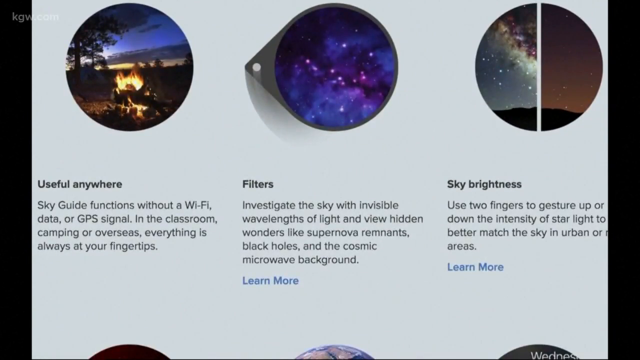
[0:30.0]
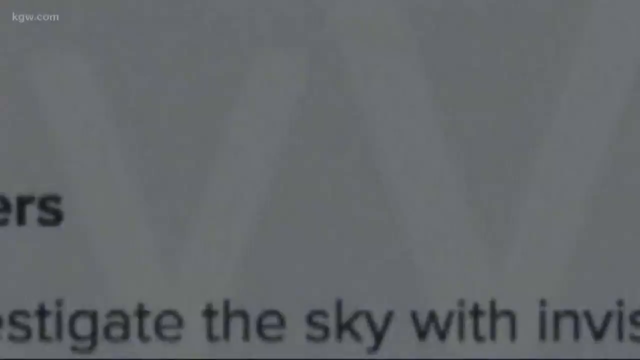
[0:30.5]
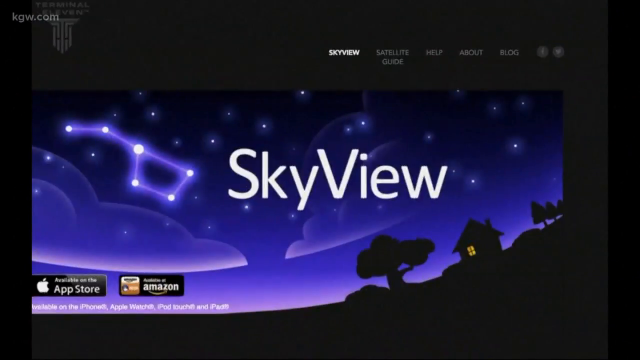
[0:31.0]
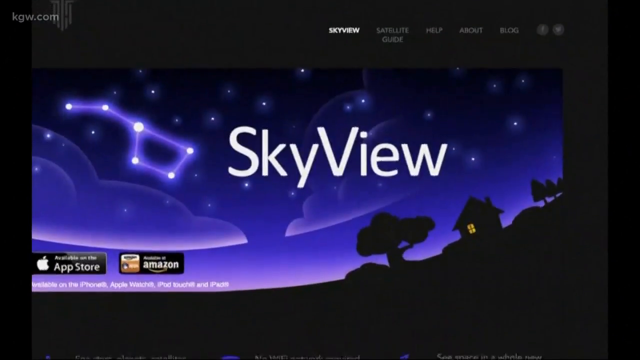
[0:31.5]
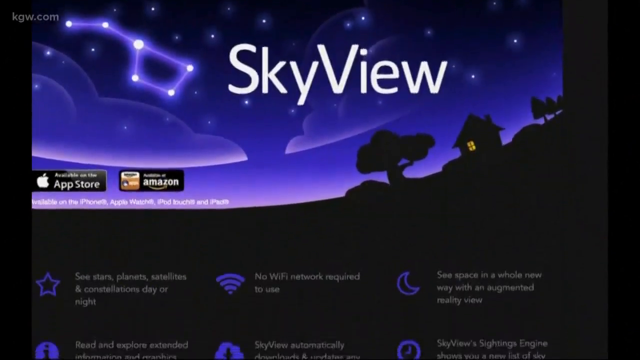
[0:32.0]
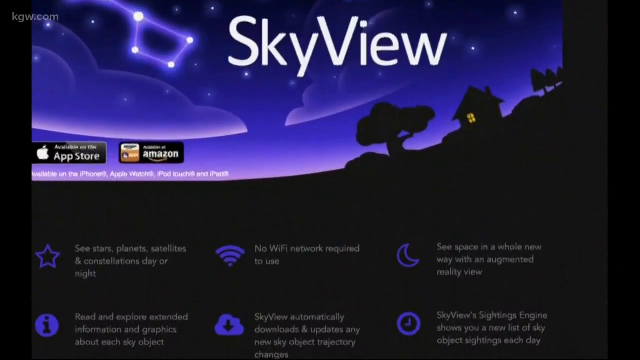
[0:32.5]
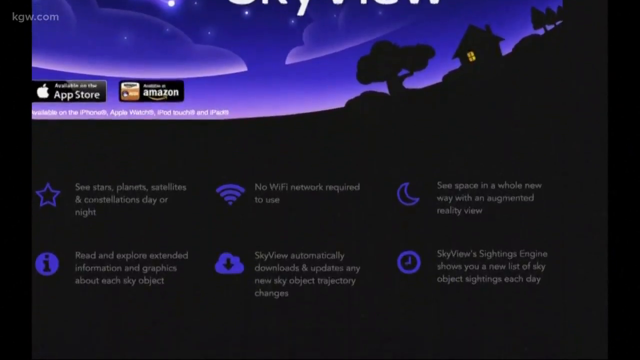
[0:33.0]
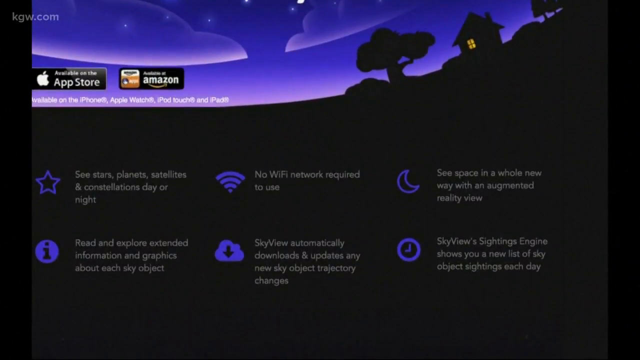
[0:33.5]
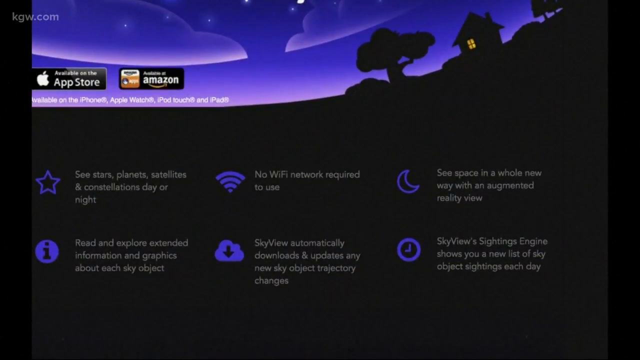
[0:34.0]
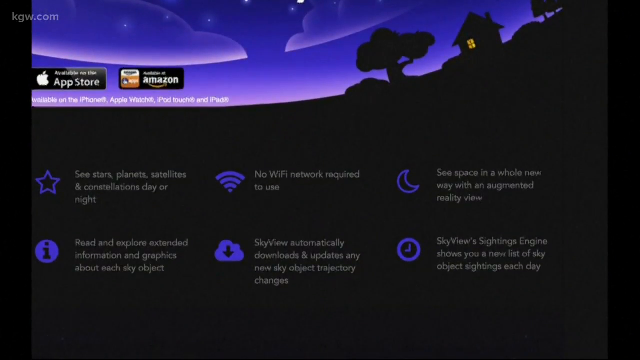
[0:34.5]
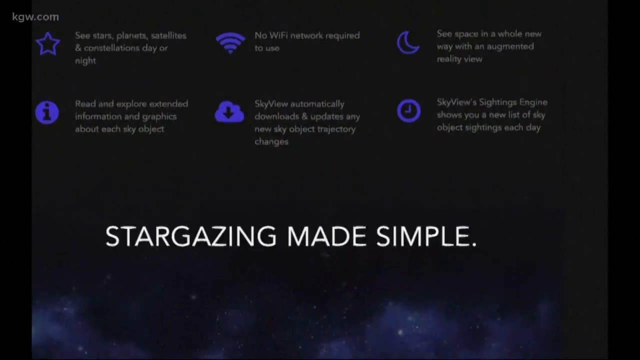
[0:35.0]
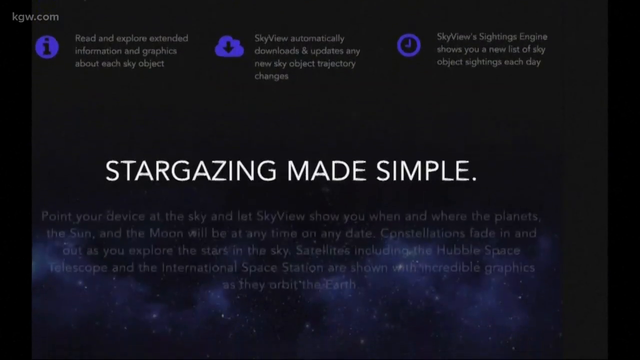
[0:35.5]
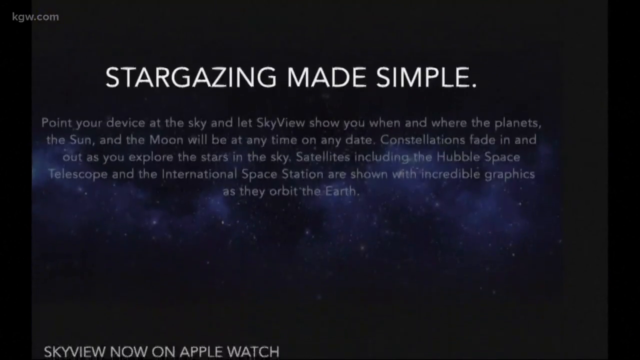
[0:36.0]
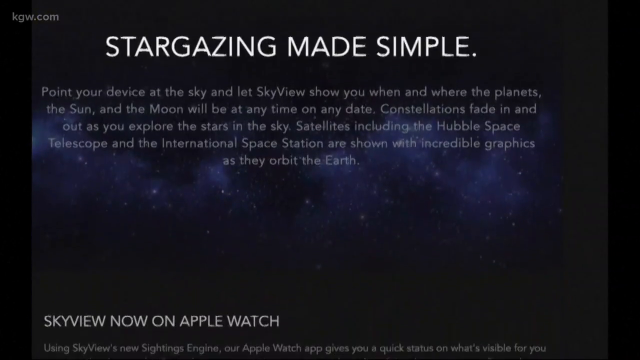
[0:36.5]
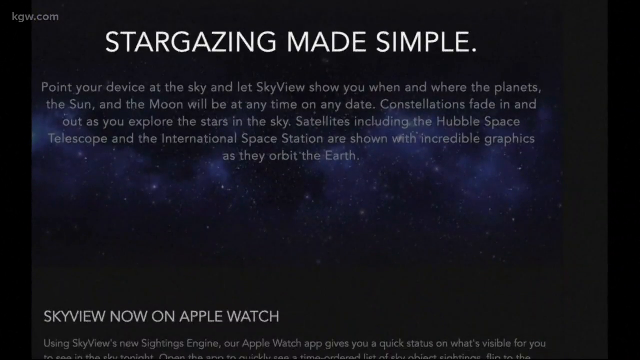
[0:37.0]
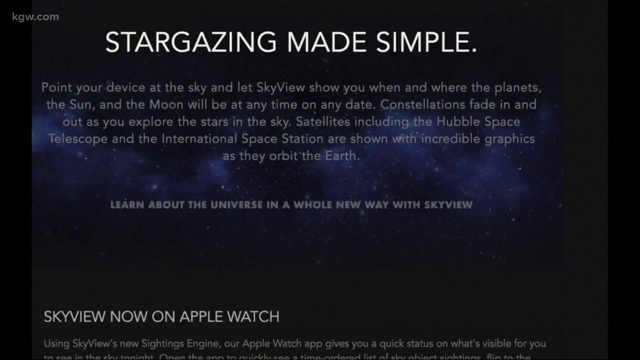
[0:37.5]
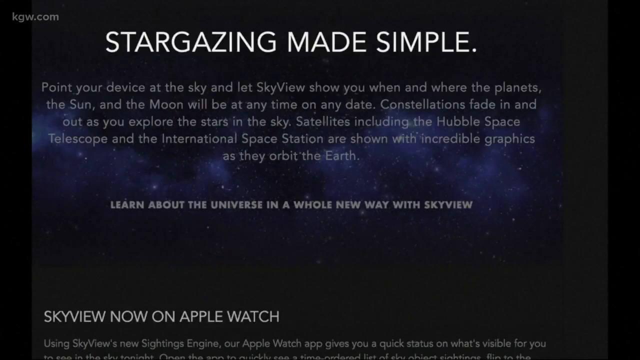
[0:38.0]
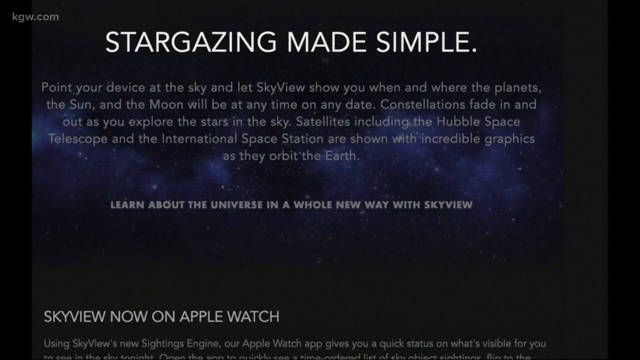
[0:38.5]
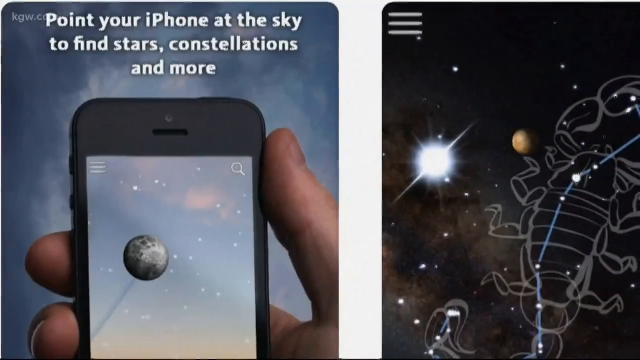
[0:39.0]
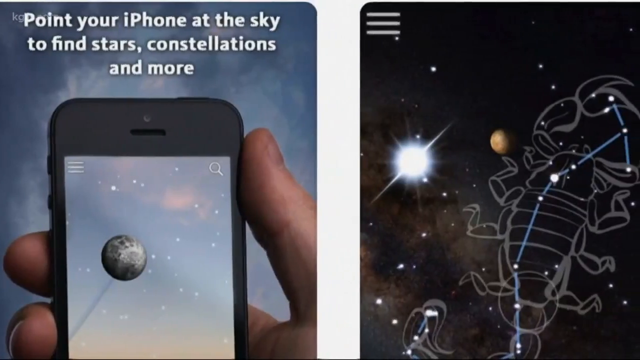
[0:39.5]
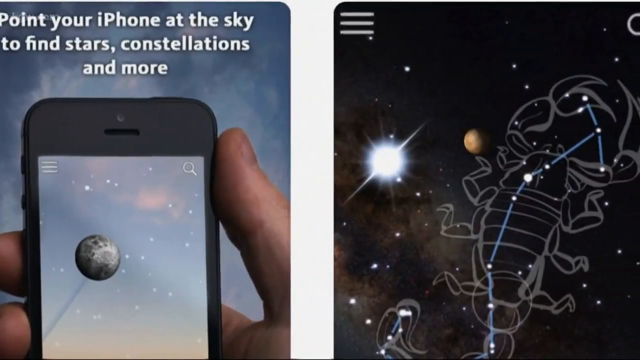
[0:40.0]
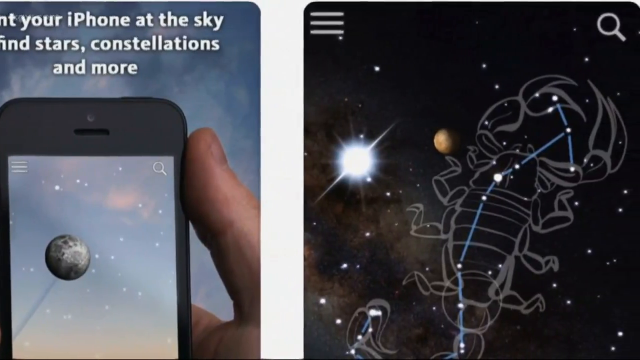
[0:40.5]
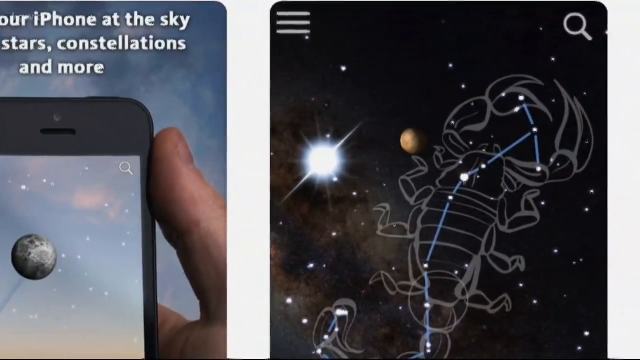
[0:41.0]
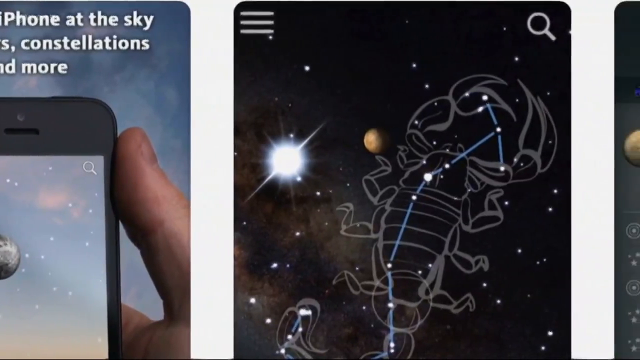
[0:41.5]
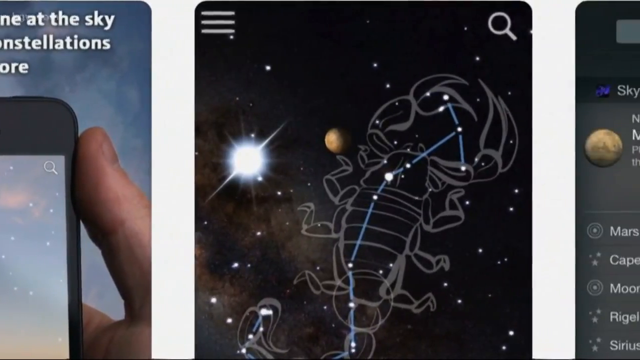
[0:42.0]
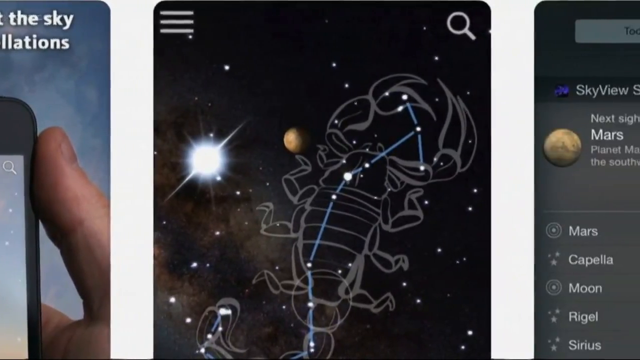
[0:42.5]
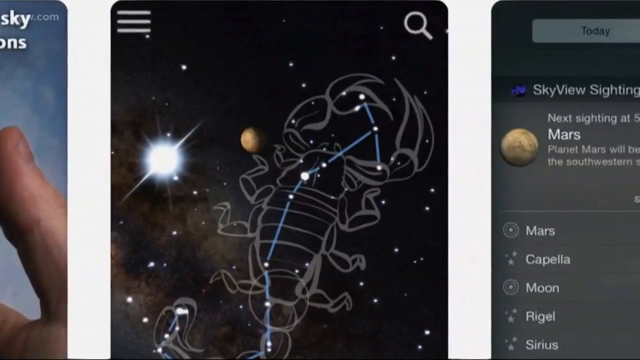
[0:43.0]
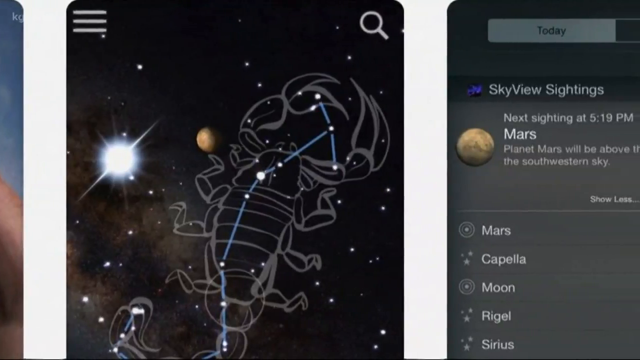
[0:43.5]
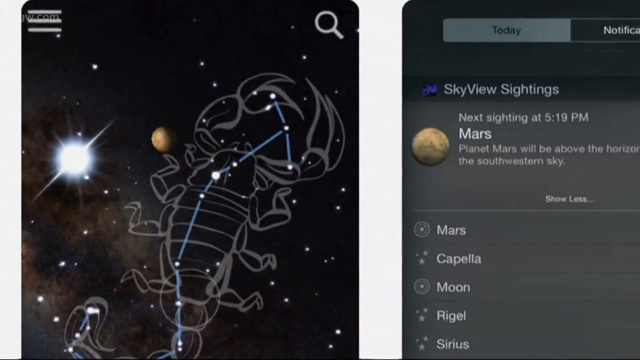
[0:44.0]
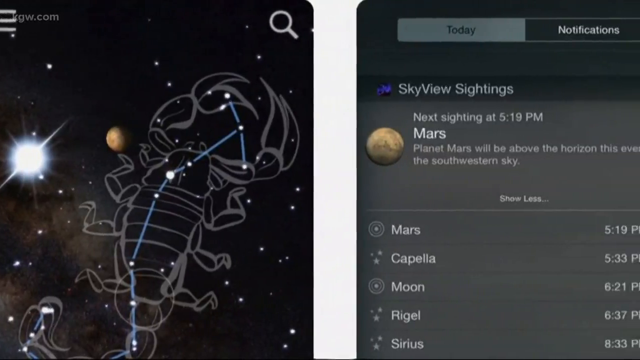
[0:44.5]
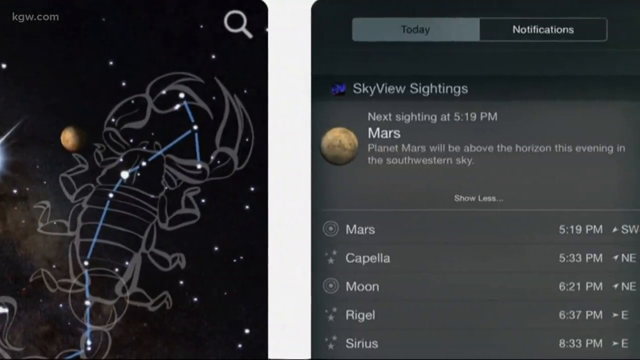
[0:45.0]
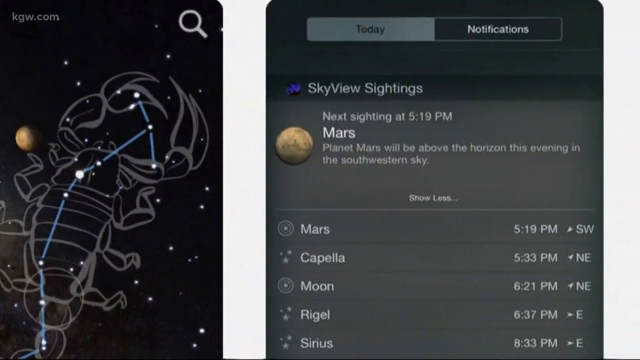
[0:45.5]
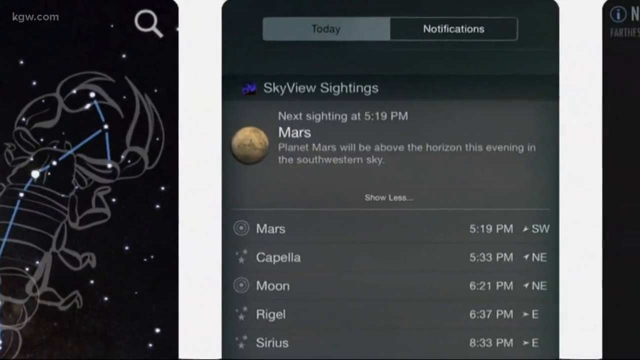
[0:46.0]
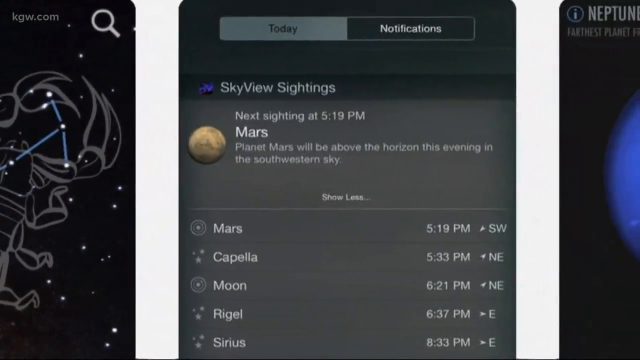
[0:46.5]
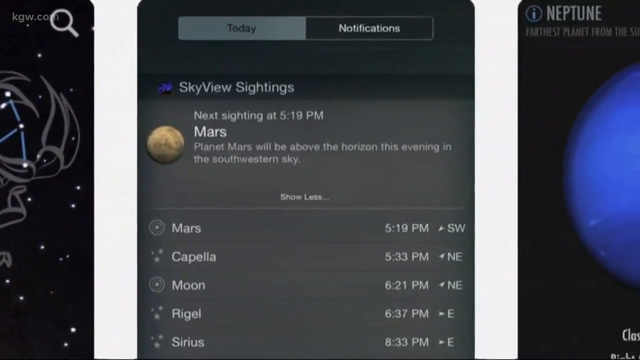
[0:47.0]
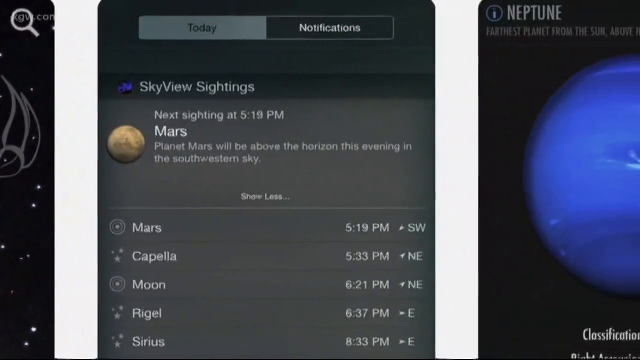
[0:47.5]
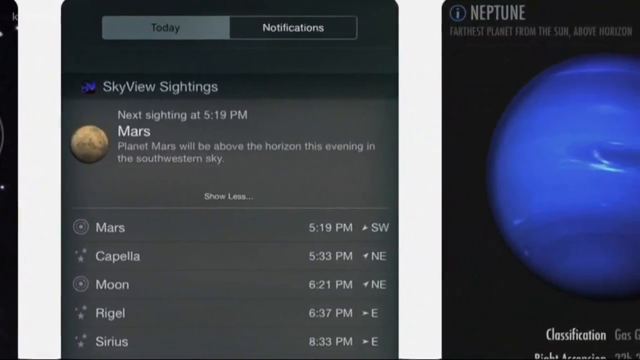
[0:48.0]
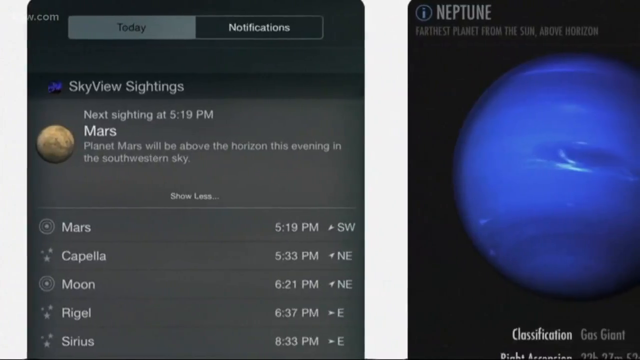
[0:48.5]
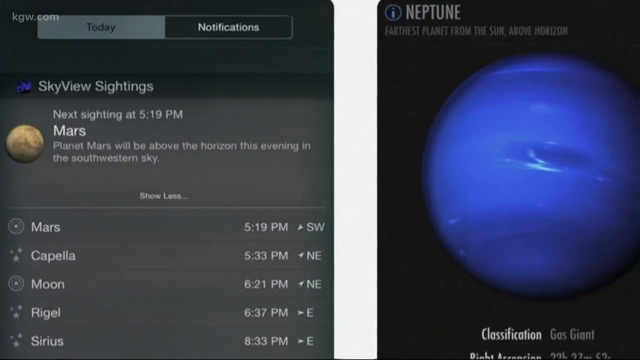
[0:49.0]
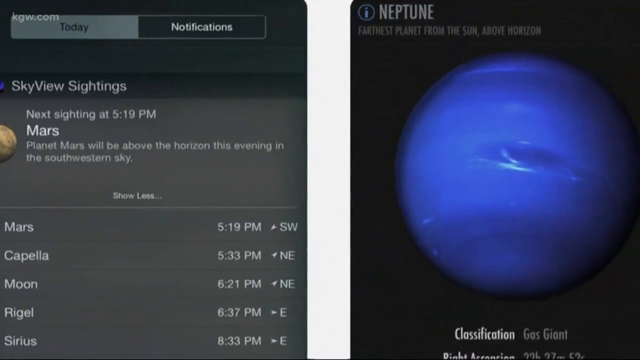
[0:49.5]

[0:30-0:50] A white screen appears with a thin black border on the left and right, running vertically from bottom to top. Across the top of the white screen are three circles containing images. The first shows some sort of campsite fire in the foreground, with the silhouette of a tree at the top left of the circle; it is evidently getting late, and there is sky to the right. The middle circle holds some sort of celestial, cloudy, purple, lilac-colored scene with stars visible, with a pointed bit protruding to its left-hand side. The third circle is split by a white line down the middle, and both sides show some sort of night sky, the left side cloudier, with more color and more variation. Under the first circle is the text "Useful Anywhere, Sky Guide Functions Without Wi-Fi, Data, or GPS Signal, In the Classroom, Camping, or Overseas. Everything is always at your fingertips." Under the second is "Filters, Investigate the Sky with Invisible Wavelengths of Light, and View Hidden Wonders like Supernova Remnants, Black Holes, and the Cosmic White Microwave Background", followed by a "Learn More" option in blue font, in contrast to the black of the other text on the white background. Under the third circle is "Sky Brightness", with text below reading "Use two fingers to gesture up or down the intensity of starlight to better match the sky in urban or rural areas", and another "Learn More" in blue font below that. Next comes another colorful graphic of Sky View showing a night sky, which scrolls down to give other options and leads to a further heading, "Stargazing Made Simple". A scrolling screen then moves from right to left with various telephone screens showing options.